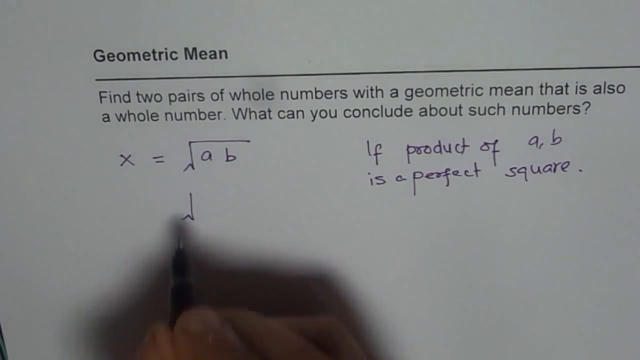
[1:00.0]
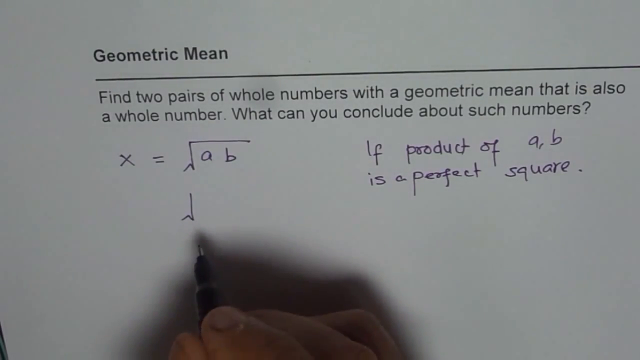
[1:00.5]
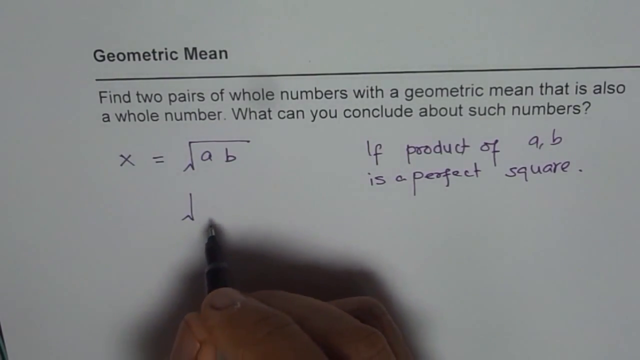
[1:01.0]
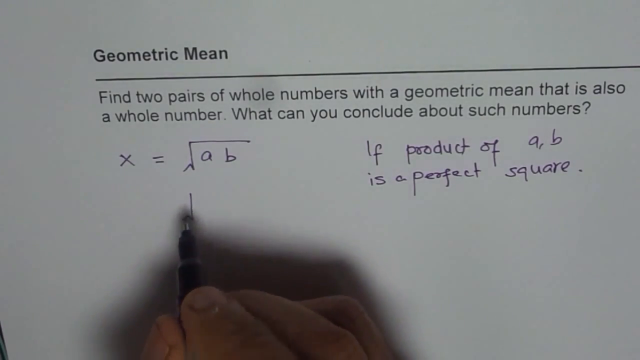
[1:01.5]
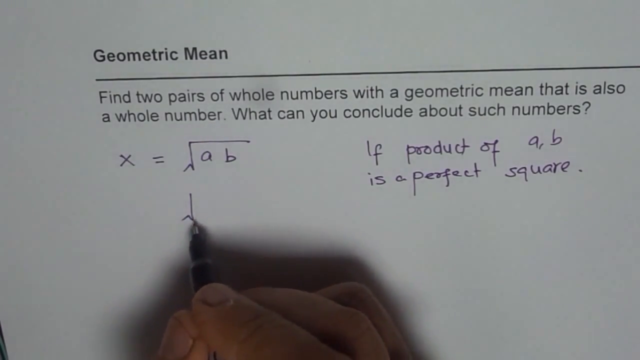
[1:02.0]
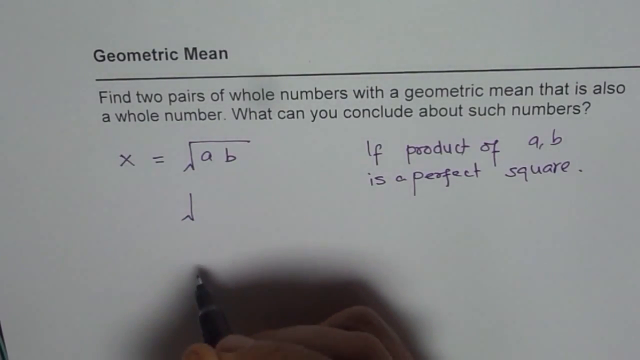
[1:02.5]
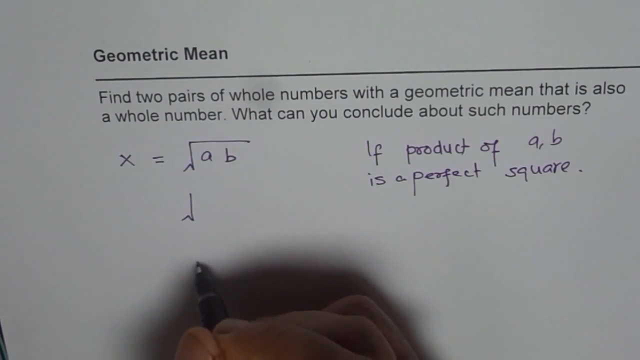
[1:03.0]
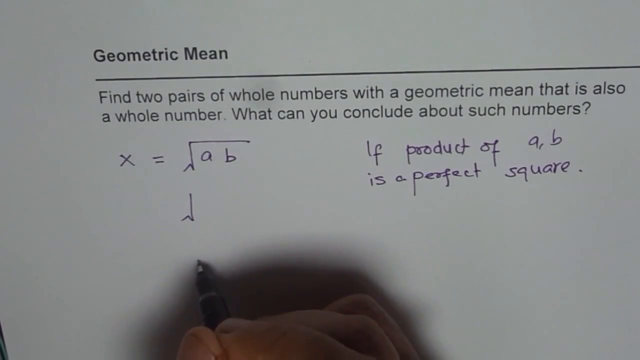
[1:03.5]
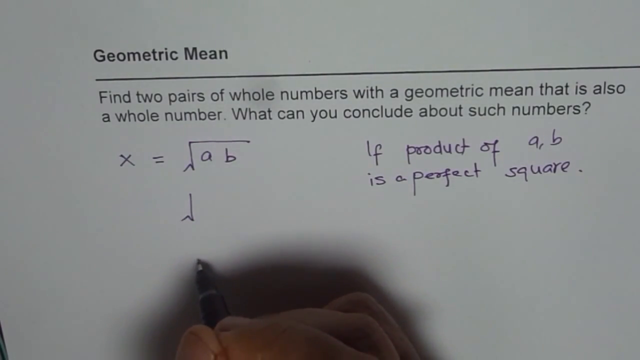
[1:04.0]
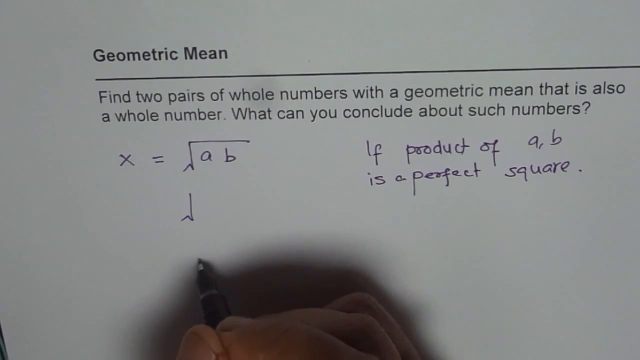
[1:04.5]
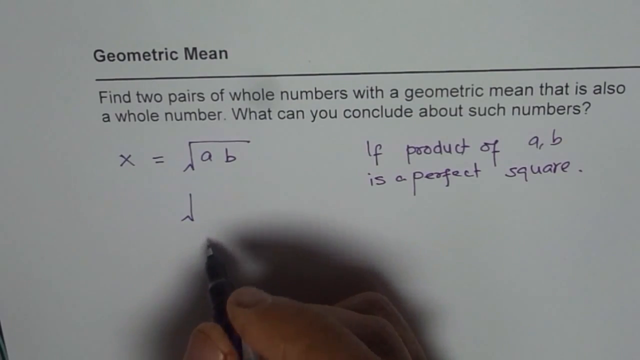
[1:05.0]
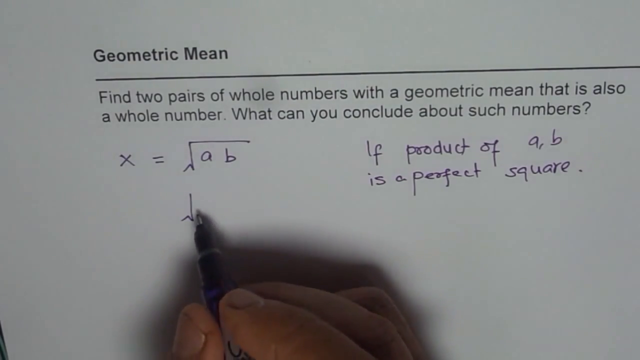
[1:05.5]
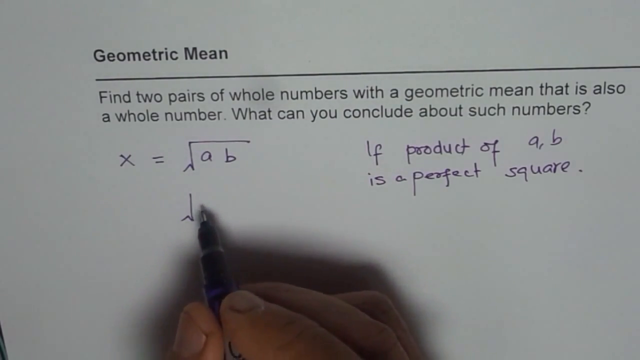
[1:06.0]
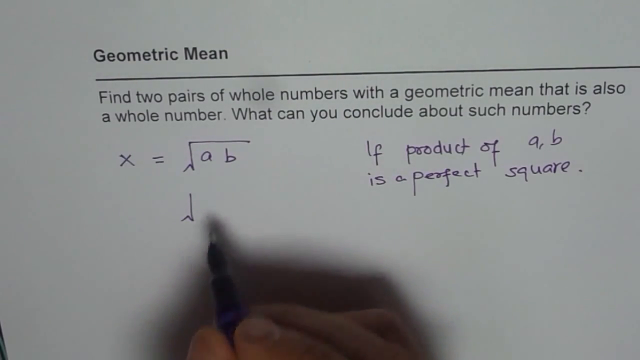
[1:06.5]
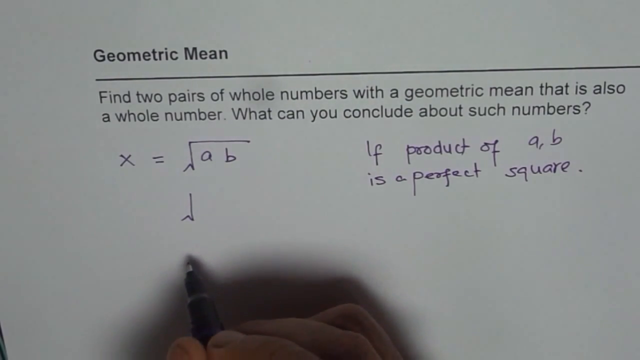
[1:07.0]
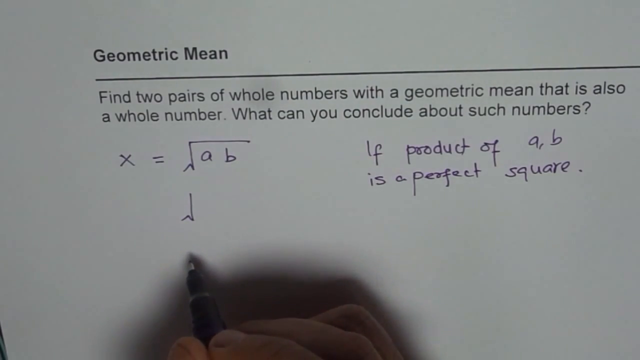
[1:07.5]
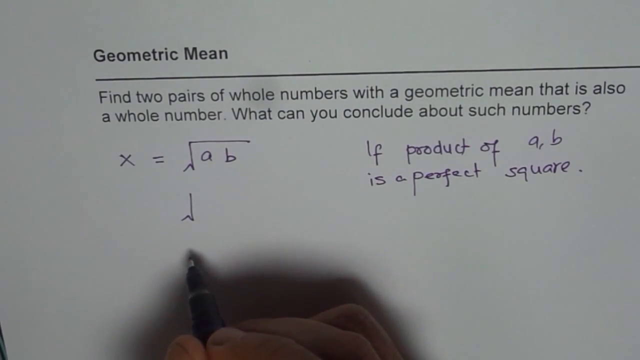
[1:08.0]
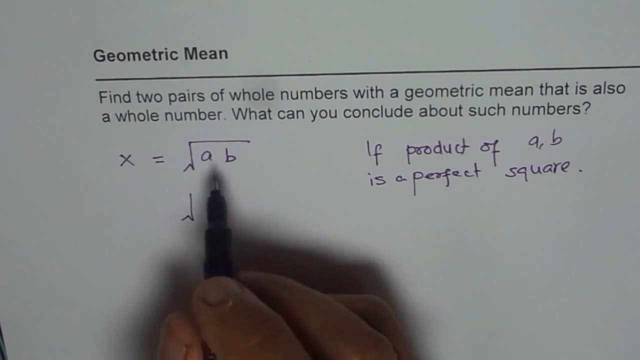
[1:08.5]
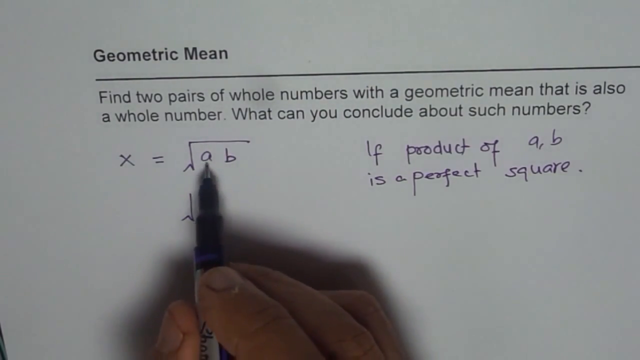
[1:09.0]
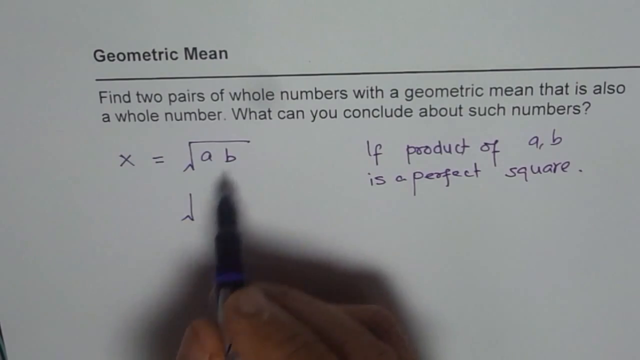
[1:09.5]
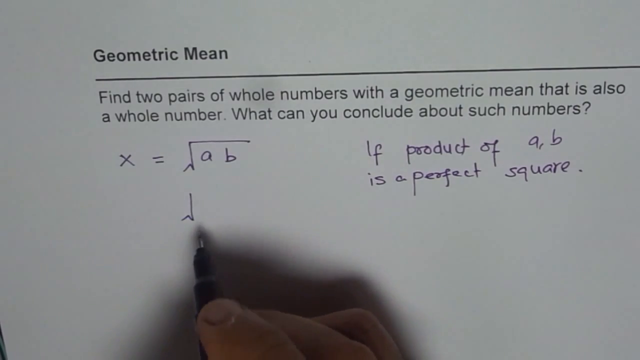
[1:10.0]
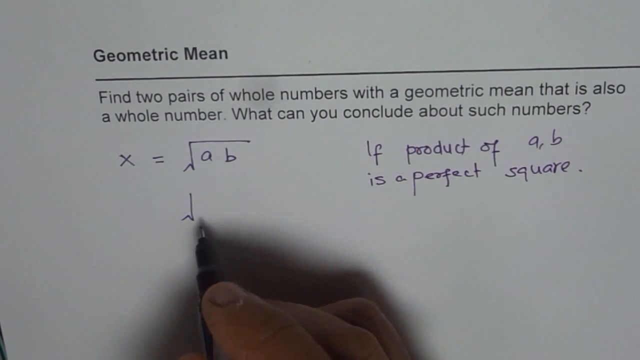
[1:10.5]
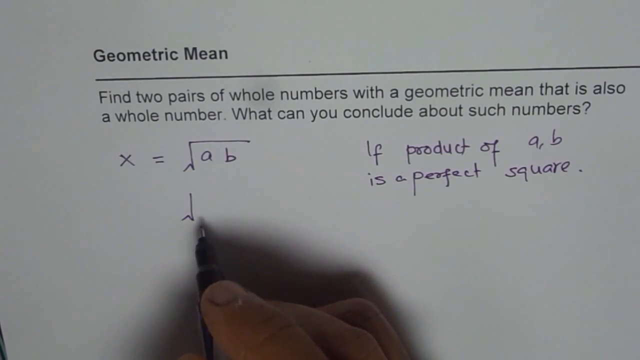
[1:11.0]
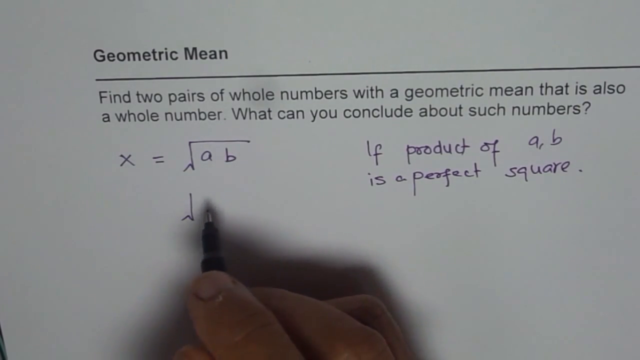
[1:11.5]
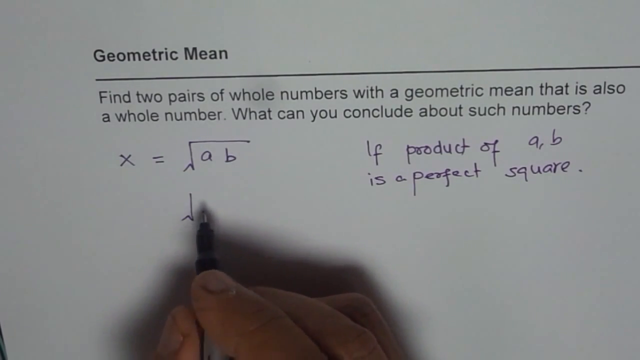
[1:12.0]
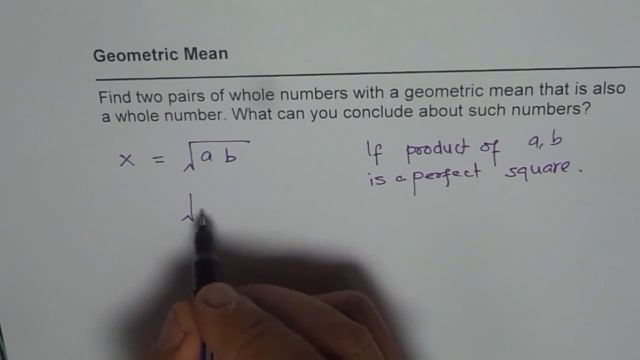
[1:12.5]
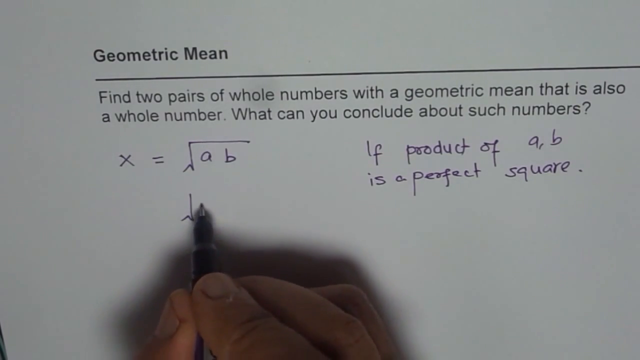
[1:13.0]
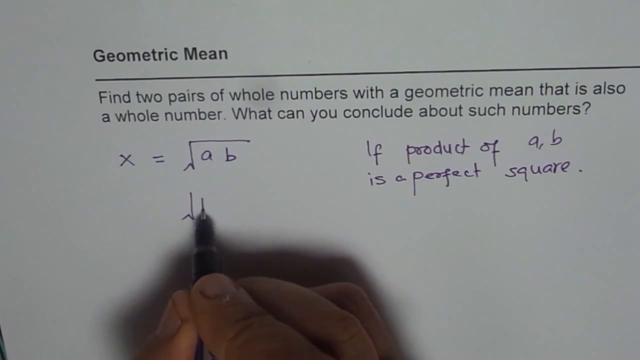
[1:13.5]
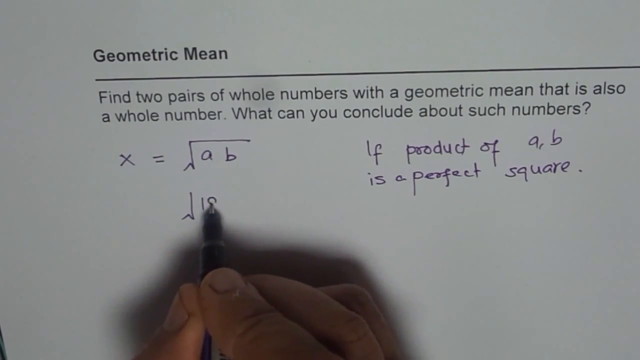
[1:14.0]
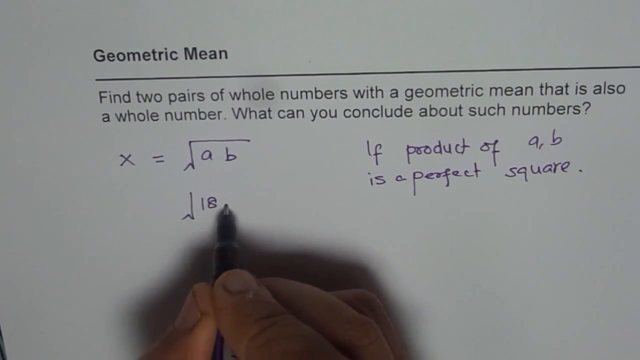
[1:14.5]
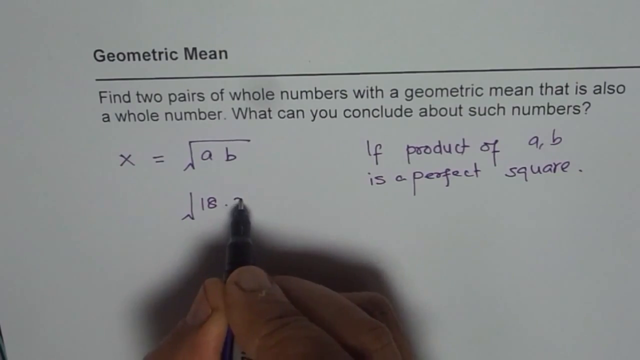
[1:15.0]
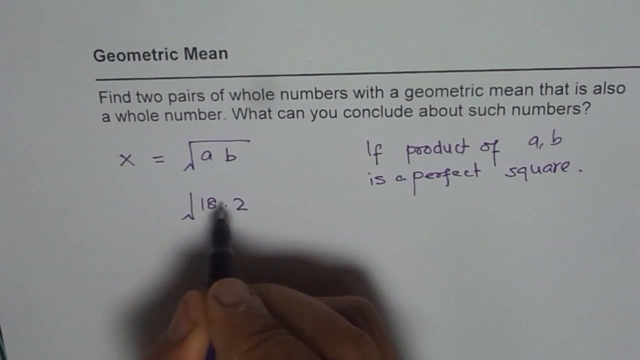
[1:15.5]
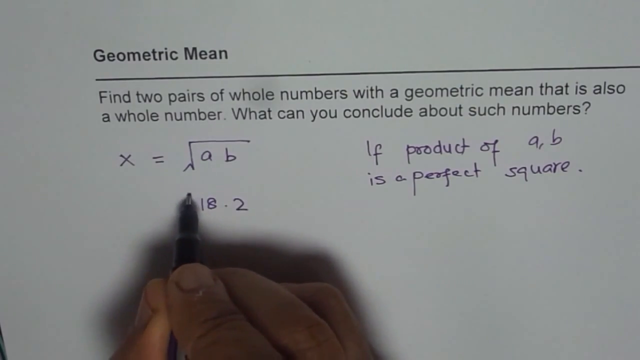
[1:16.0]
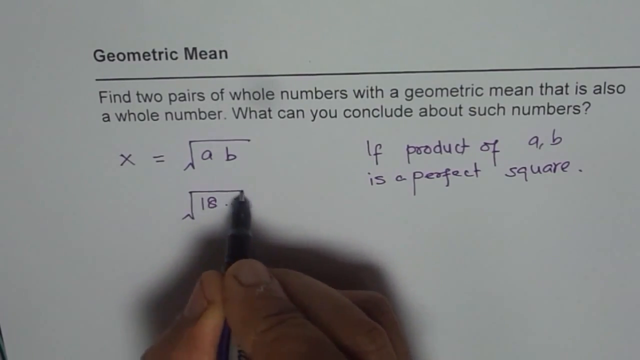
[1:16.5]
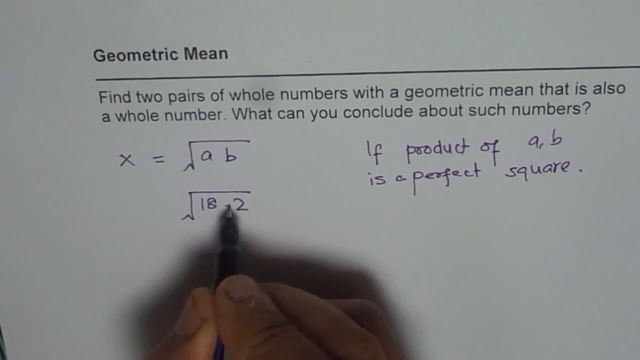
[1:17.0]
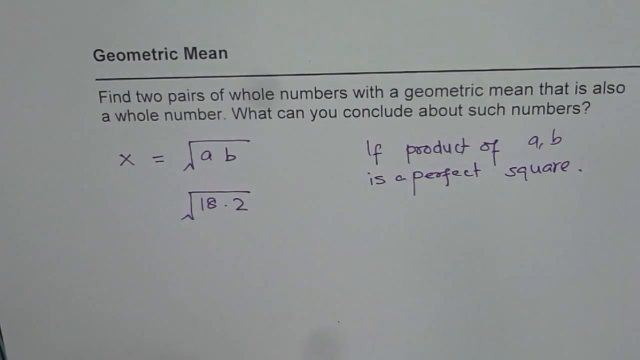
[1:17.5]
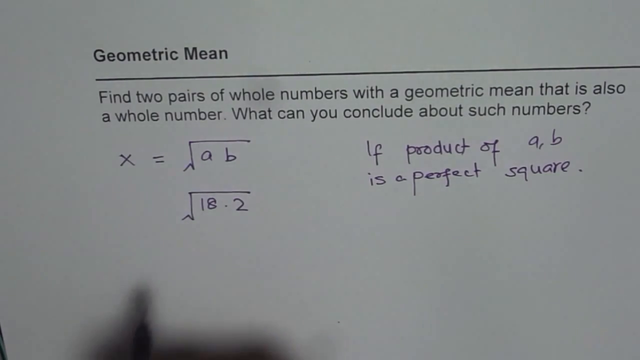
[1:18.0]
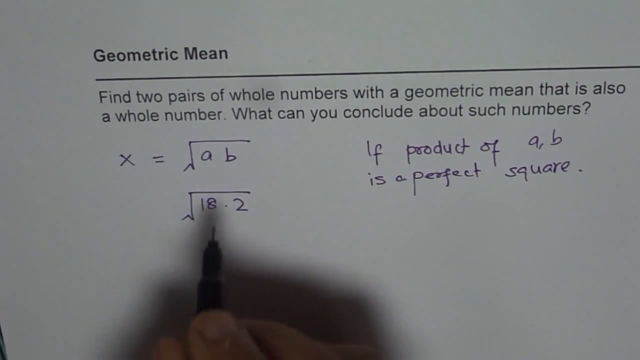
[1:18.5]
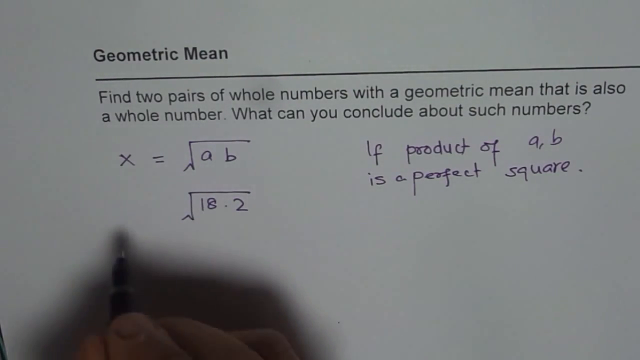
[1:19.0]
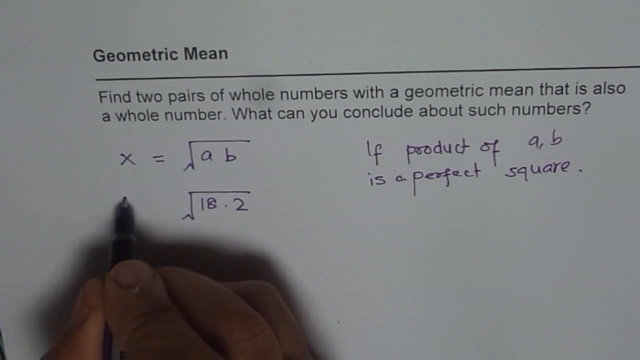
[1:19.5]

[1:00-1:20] The man's right hand with the black pen with the purple stripe is back in the scene and begins to write underneath where X equals A and B. He seems to be explaining something, because the pen moves without writing anything. He moves it up and taps on the lowercase a and the lowercase b, then comes back down to where he wrote what looks like a division box, again moving the pen around a bit without writing. He then writes 18.2 and completes the division box, moves the pen around again, and then writes another X to the left of what he just wrote, in neat but cramped handwriting.